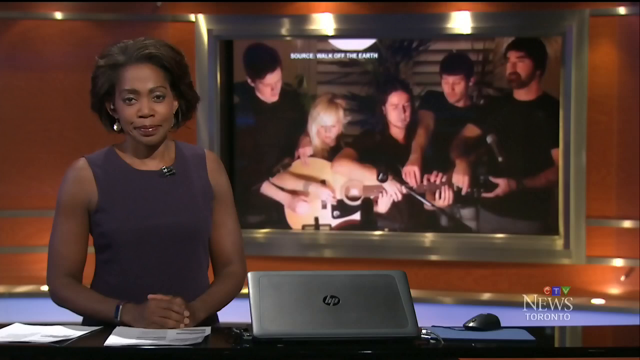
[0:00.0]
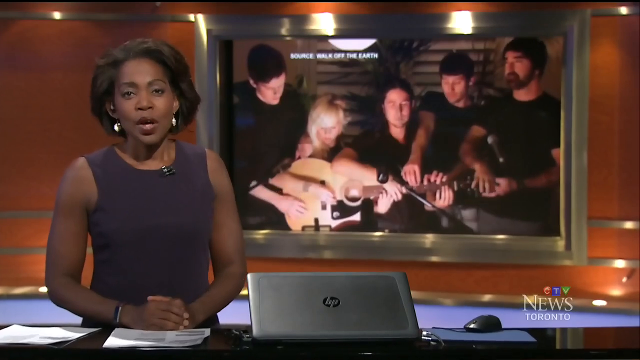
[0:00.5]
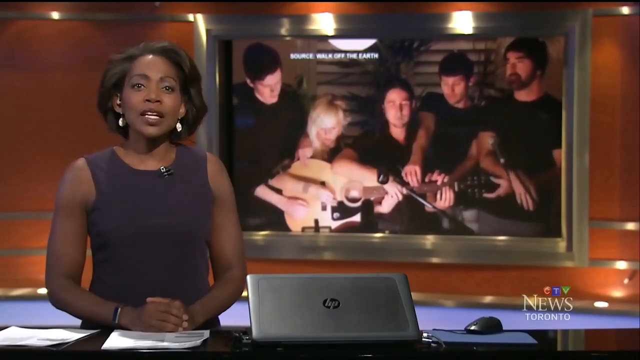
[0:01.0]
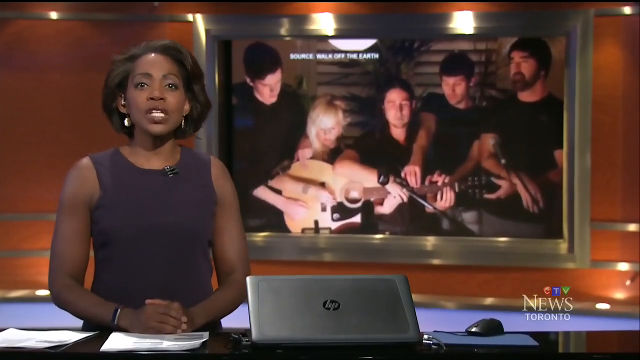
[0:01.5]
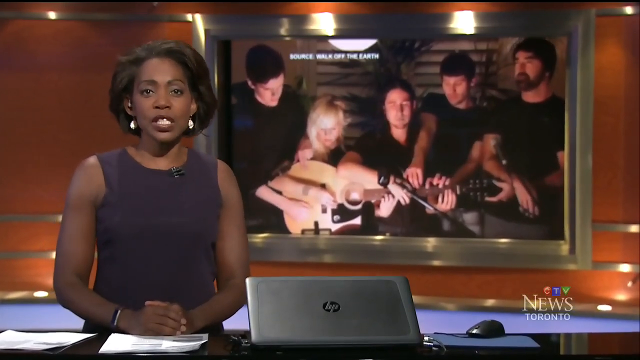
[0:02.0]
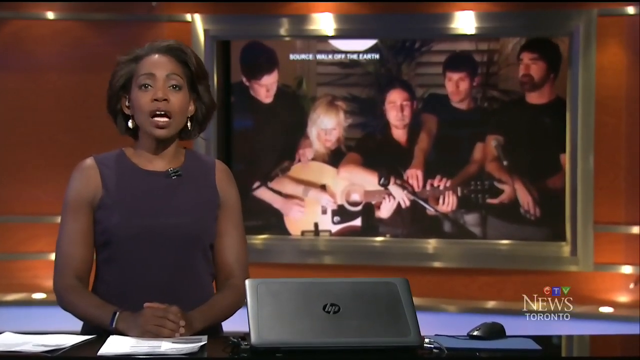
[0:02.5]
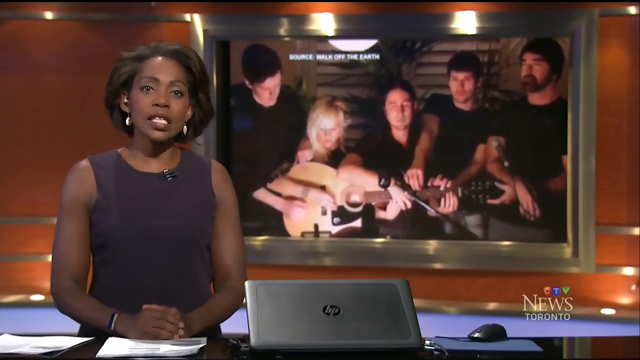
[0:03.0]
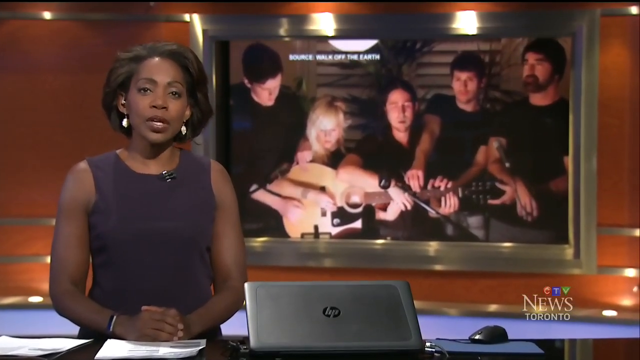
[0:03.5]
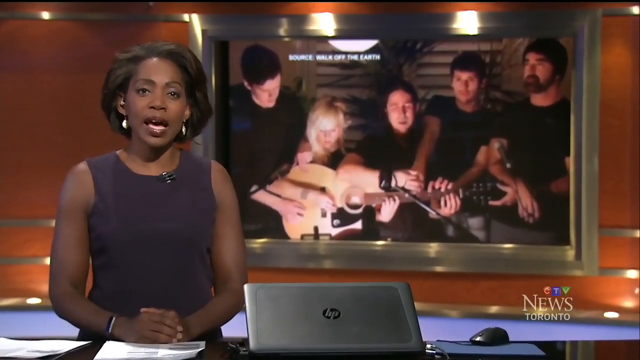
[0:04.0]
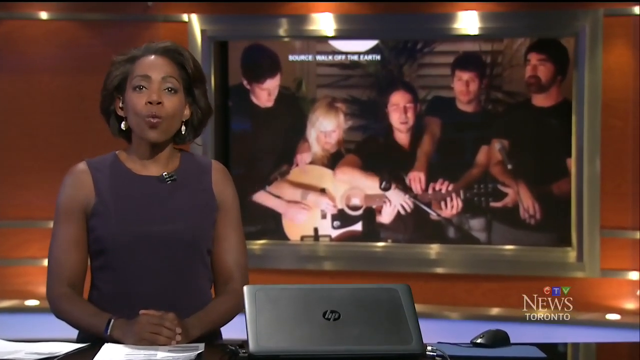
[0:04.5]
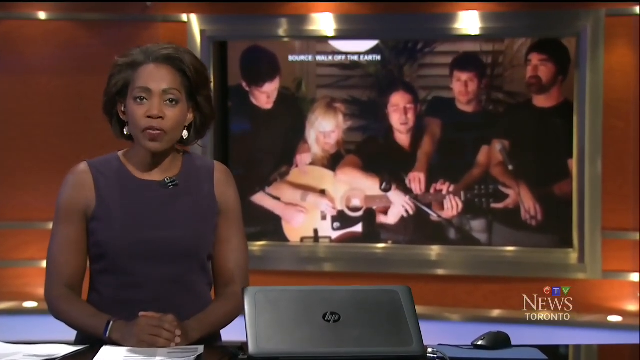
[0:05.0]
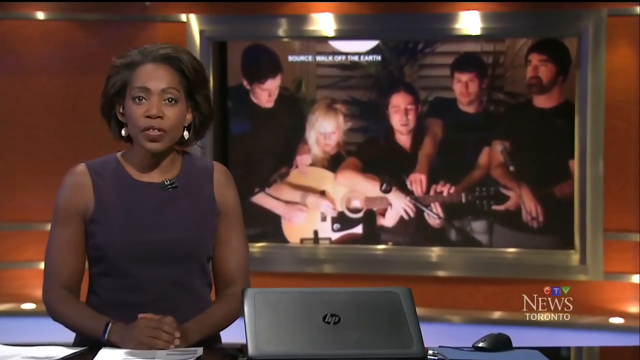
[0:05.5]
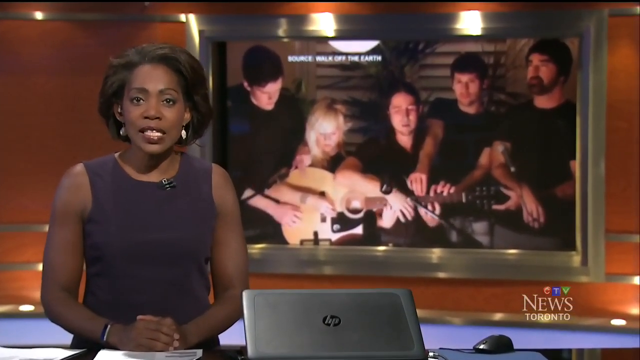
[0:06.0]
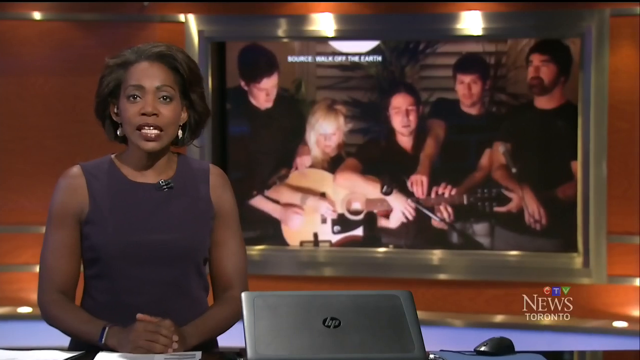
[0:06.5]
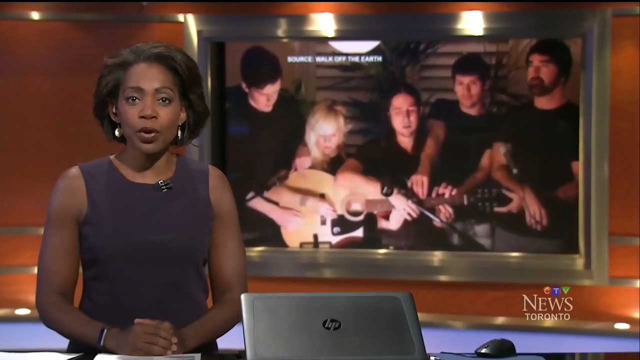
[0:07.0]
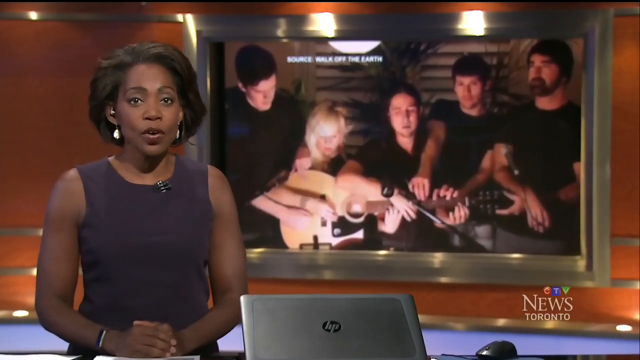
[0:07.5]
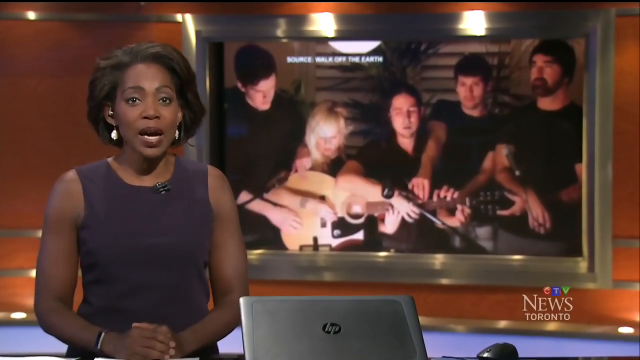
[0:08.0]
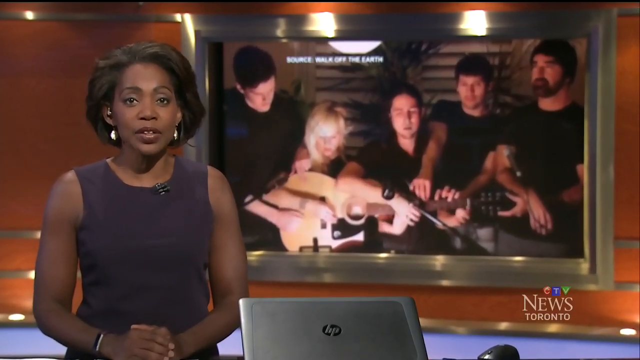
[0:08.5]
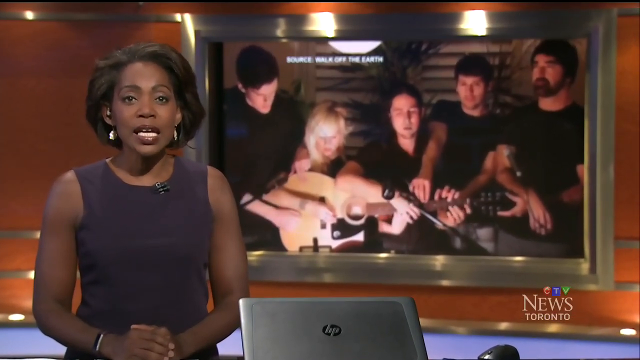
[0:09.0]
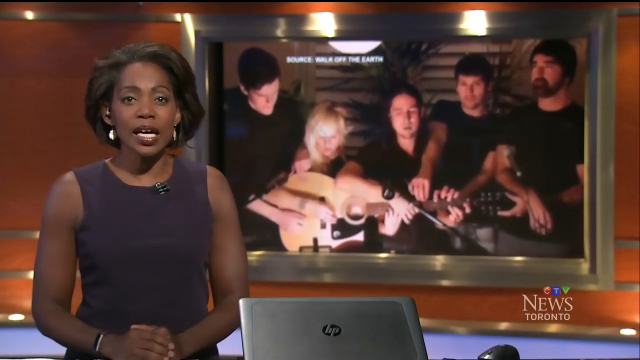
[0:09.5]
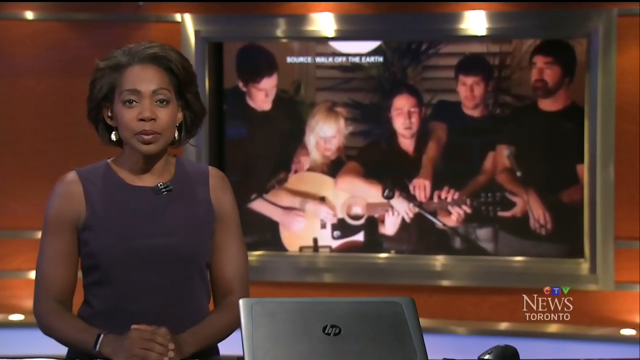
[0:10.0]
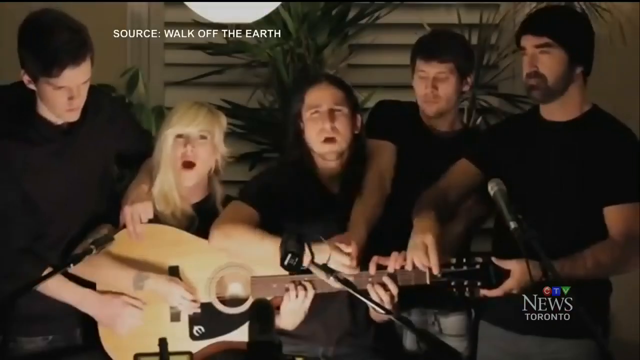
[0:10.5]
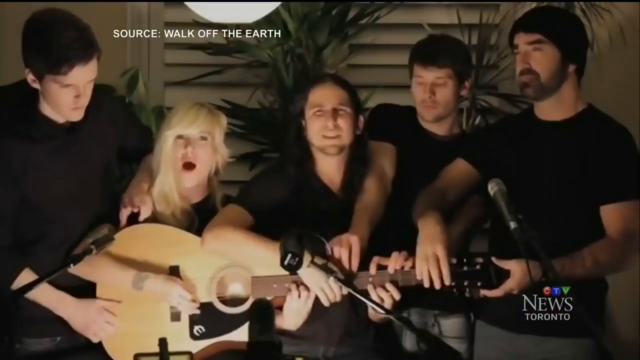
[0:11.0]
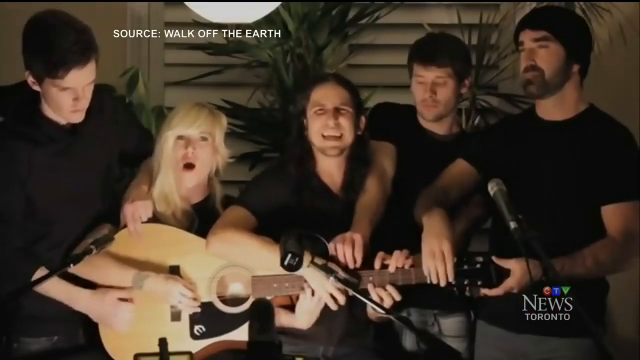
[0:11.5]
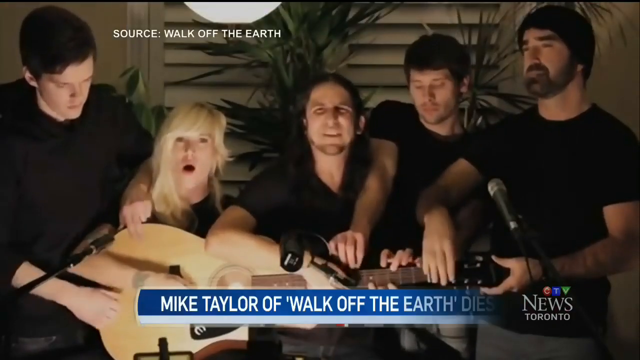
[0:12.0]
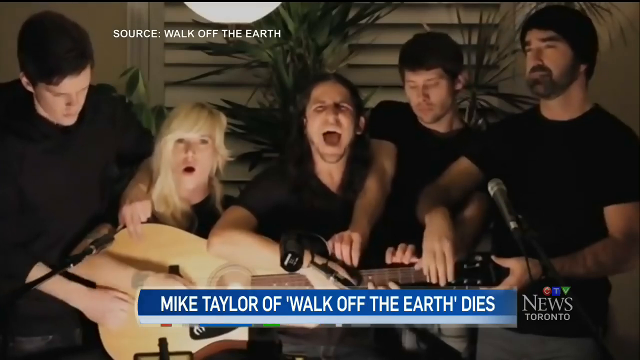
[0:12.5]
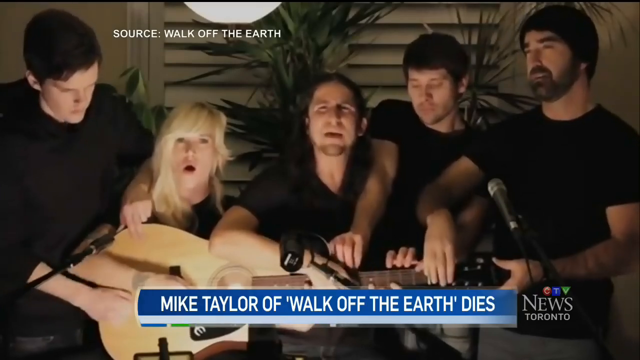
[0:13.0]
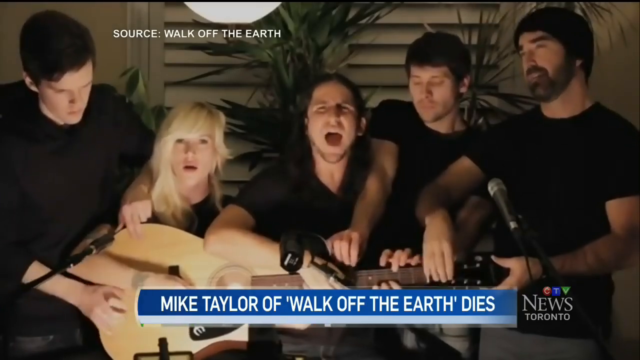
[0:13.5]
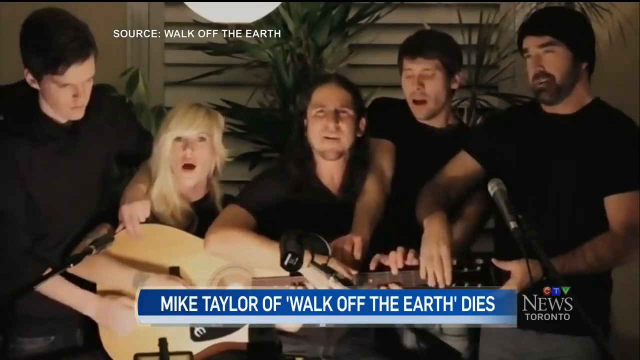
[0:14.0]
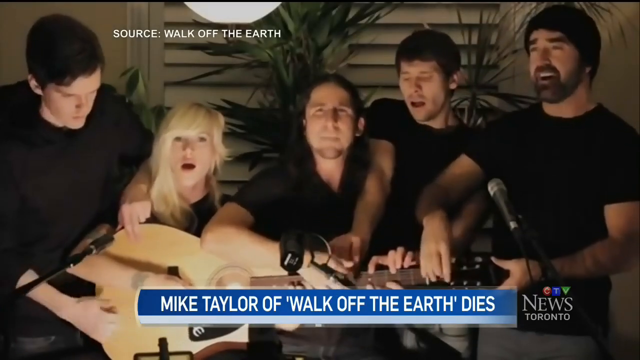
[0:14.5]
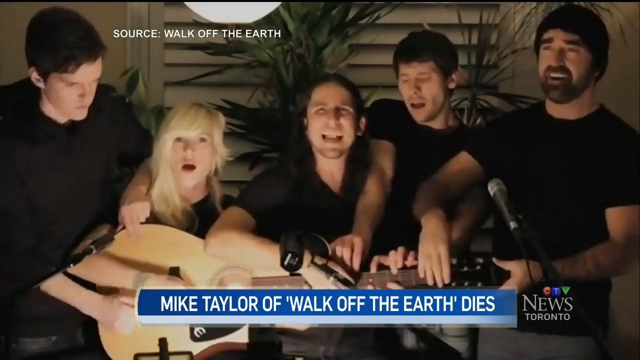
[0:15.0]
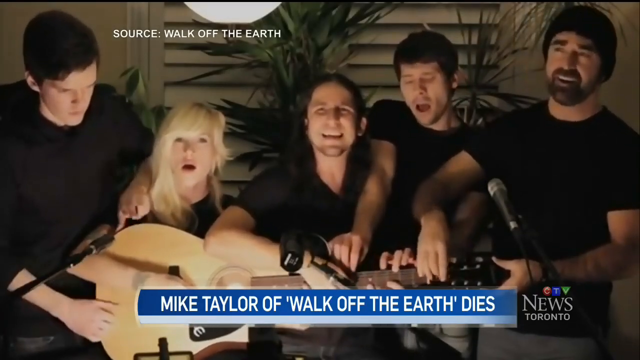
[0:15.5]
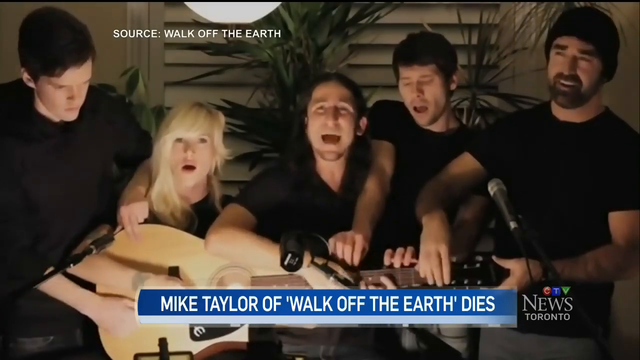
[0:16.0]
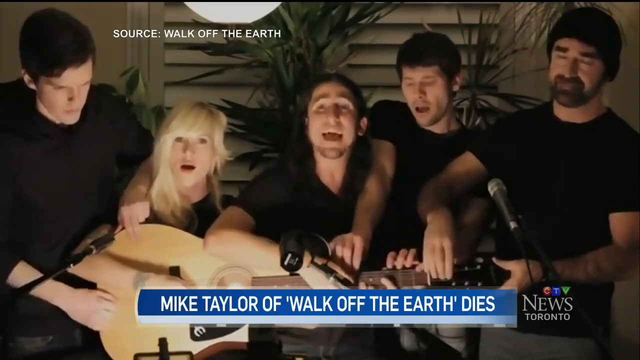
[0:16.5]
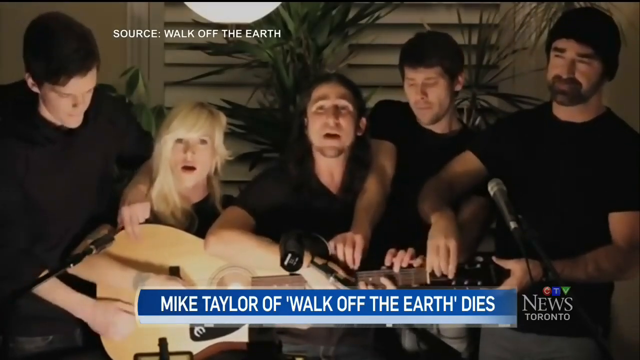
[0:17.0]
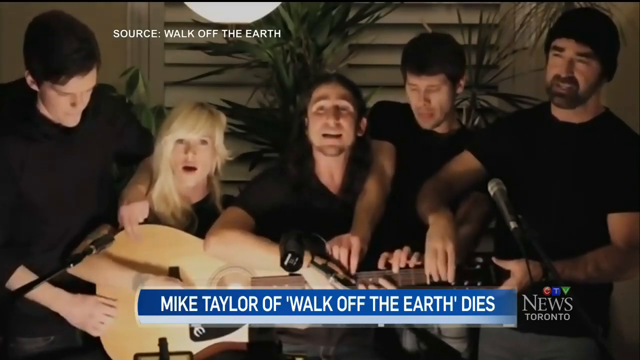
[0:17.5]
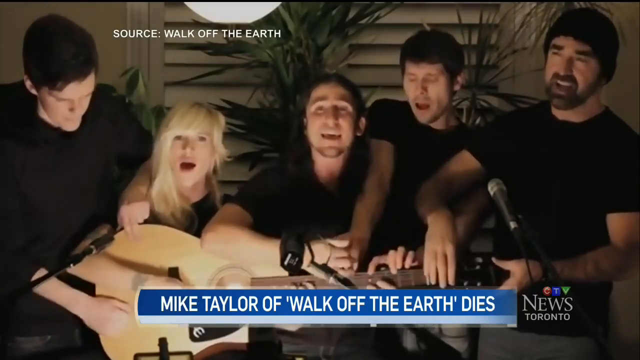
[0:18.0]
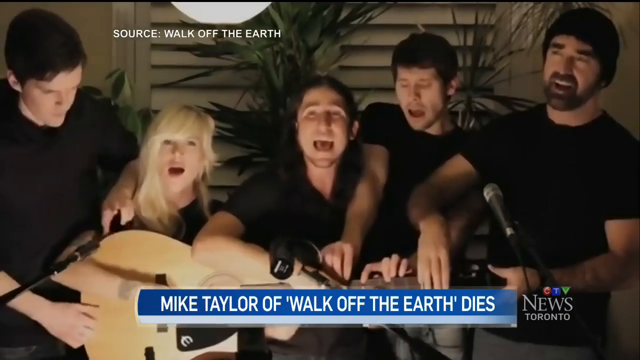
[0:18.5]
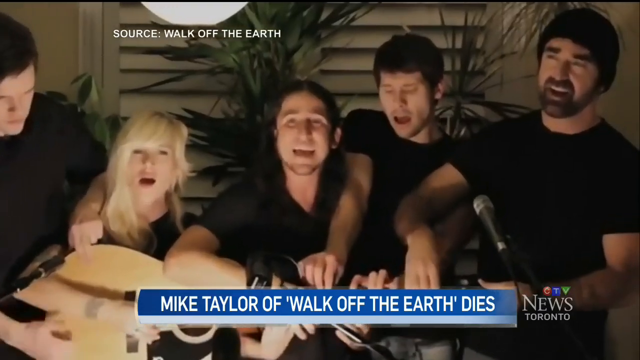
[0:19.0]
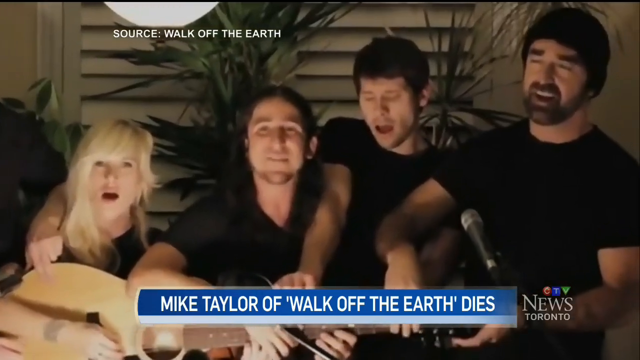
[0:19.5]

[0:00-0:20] A news anchor is seated at a desk: a Black woman with short hair, silver earrings and a sleeveless, tank-top style gray dress, facing the camera. A laptop computer is in the center of the screen, in the middle of her anchor desk. Behind her is a wood grain paneled studio wall with a large monitor display system over her left shoulder, taking up the center and right of the screen. The display shows a group of five people: four males, all in black crew neck t-shirts, and one blonde-haired female, second from the left. All of them are playing a single acoustic guitar together. The image zooms in away from the anchor to show this background video of the blonde acoustic guitar, its neck to the right and its bottom to the left. The three males on the right work the strings on the neck, the male on the far left taps on the body of the guitar, and the female, seated behind the body of the guitar, plays the strings normally with a pick. During this segment a caption at the bottom of the screen reads "MIKE TAYLOR OF 'WALK OFF THE EARTH' DIES" in white font on a blue background.